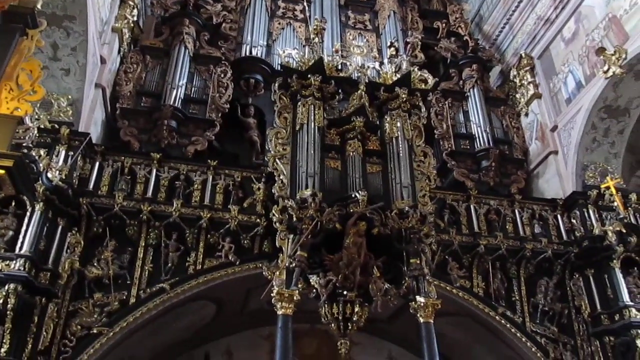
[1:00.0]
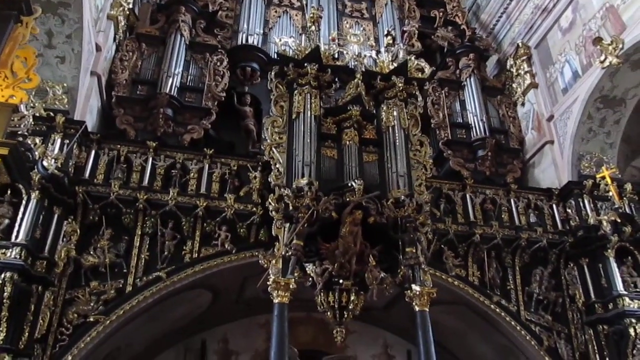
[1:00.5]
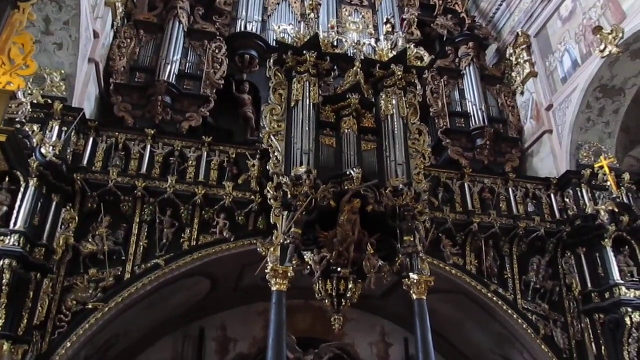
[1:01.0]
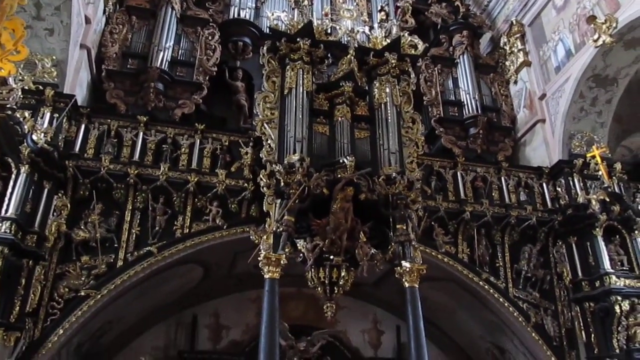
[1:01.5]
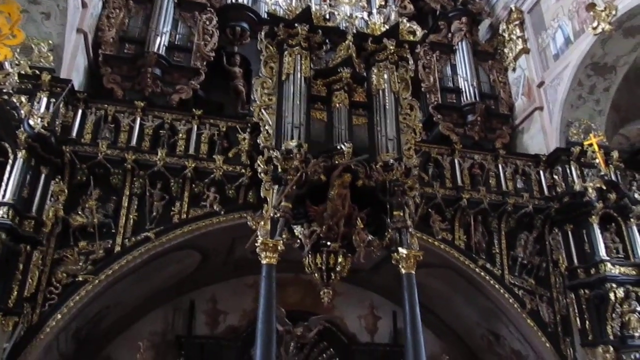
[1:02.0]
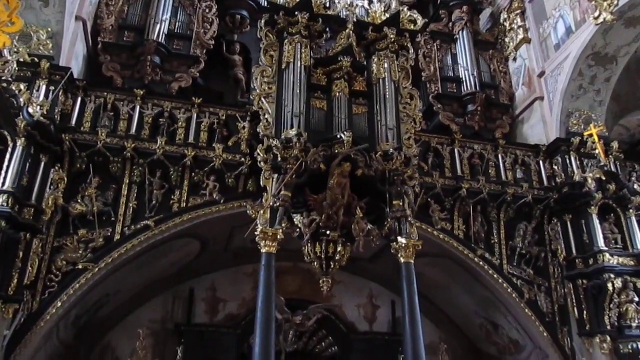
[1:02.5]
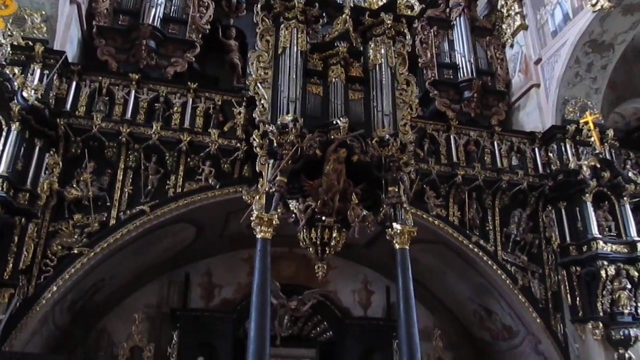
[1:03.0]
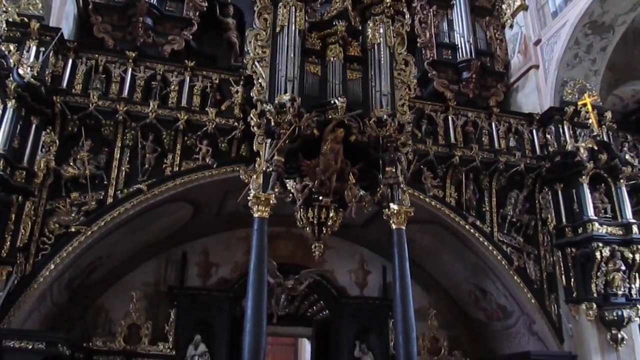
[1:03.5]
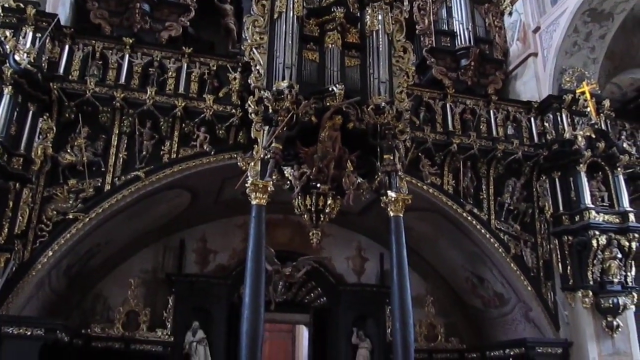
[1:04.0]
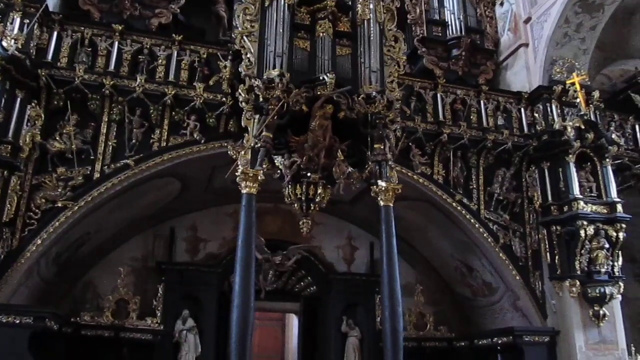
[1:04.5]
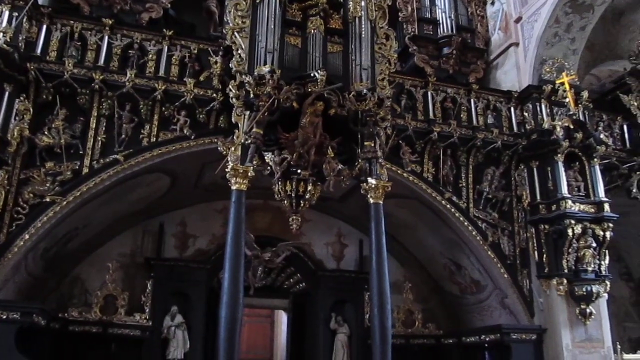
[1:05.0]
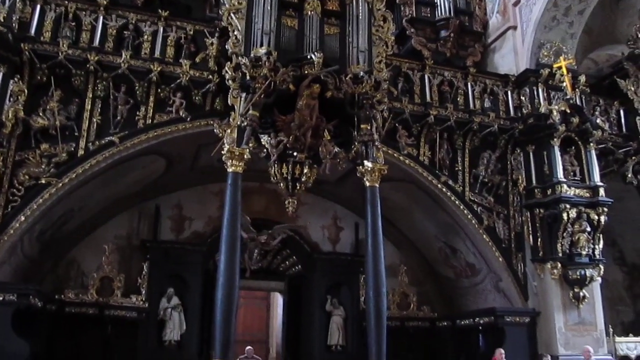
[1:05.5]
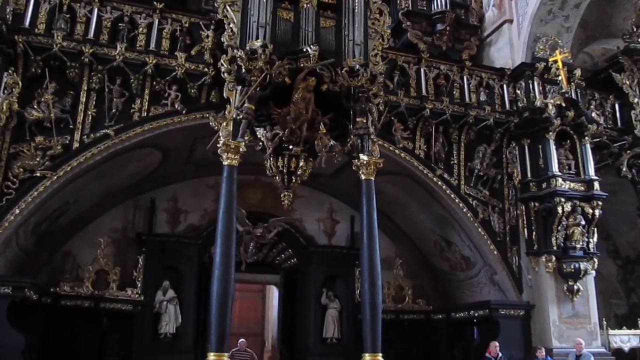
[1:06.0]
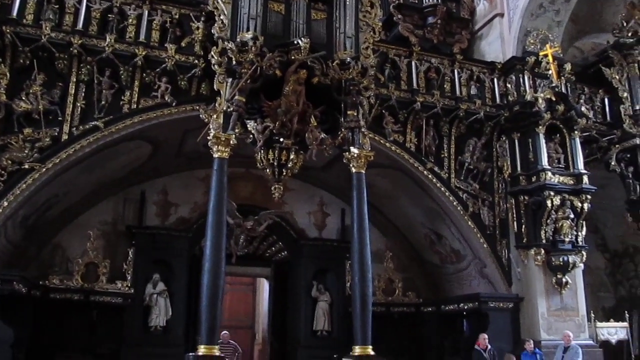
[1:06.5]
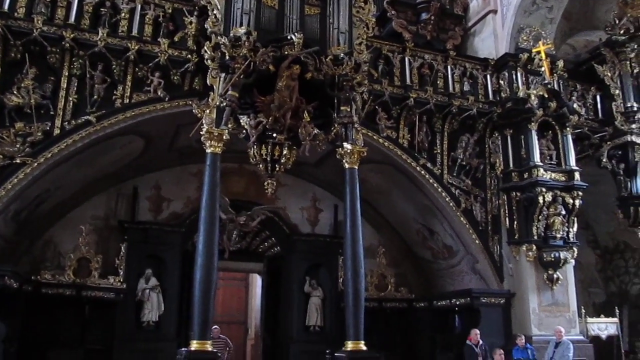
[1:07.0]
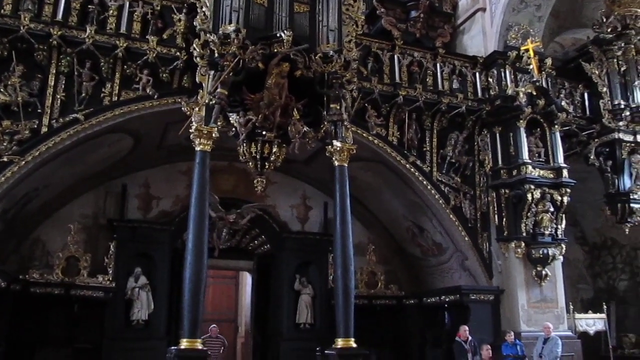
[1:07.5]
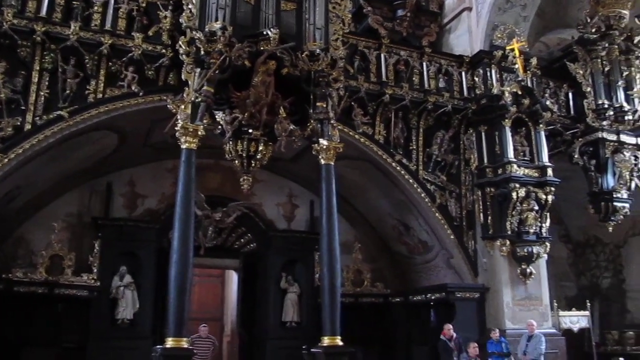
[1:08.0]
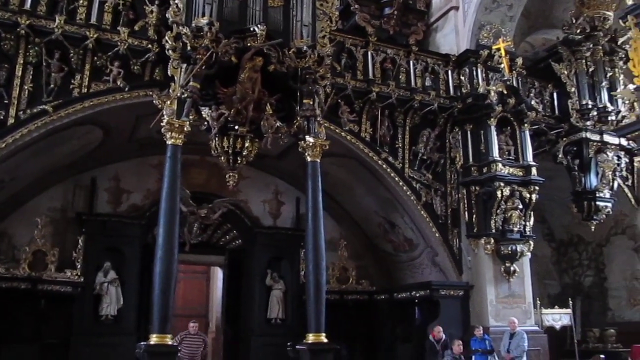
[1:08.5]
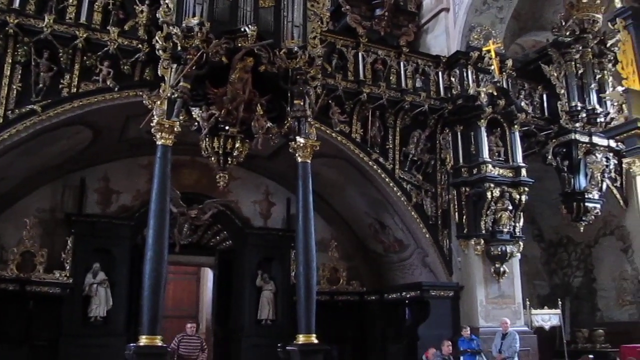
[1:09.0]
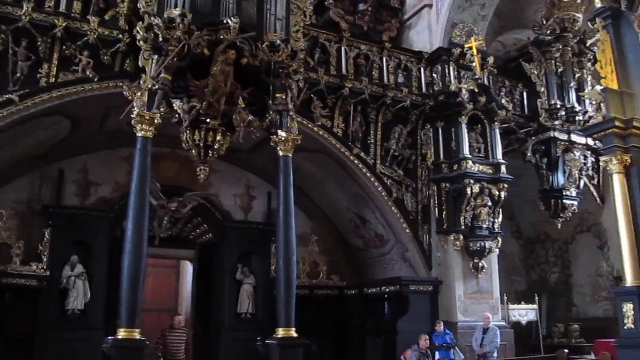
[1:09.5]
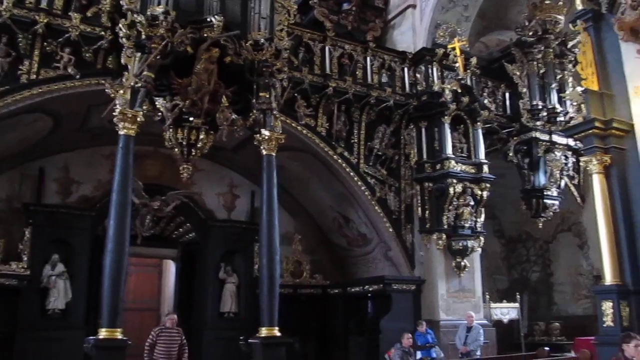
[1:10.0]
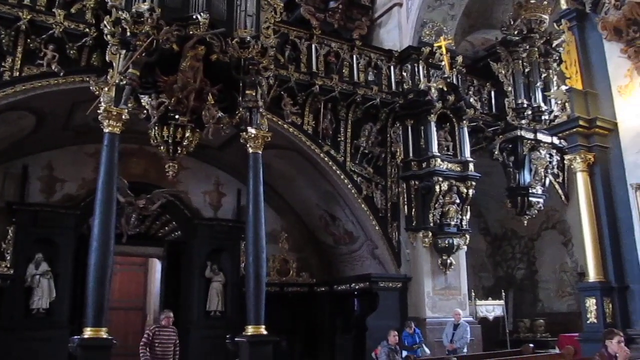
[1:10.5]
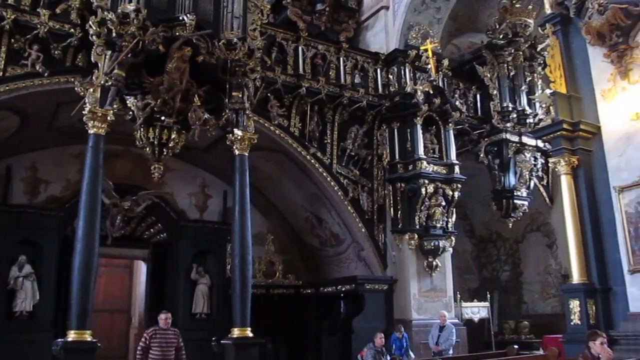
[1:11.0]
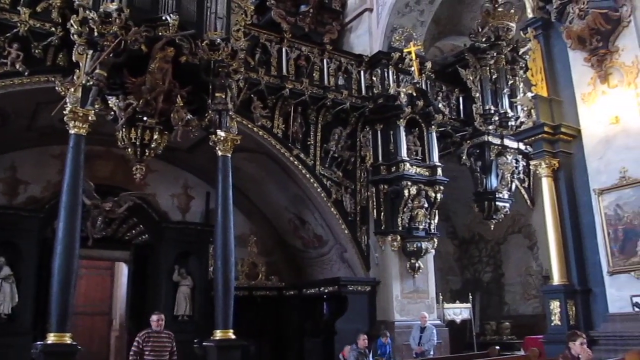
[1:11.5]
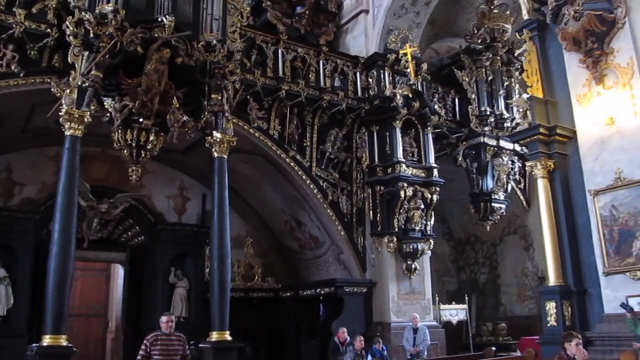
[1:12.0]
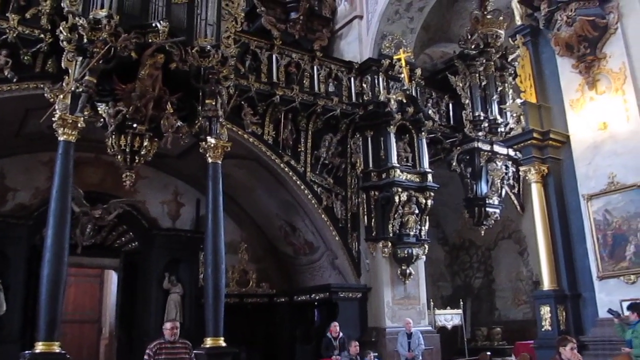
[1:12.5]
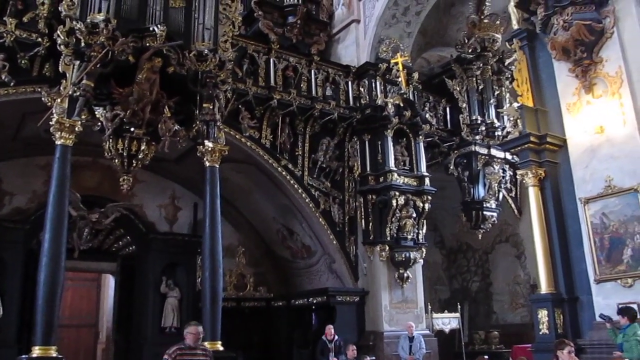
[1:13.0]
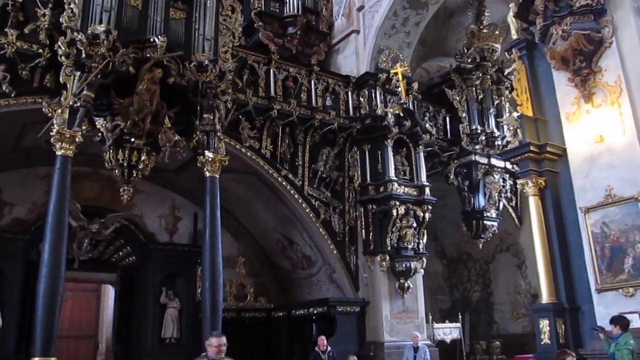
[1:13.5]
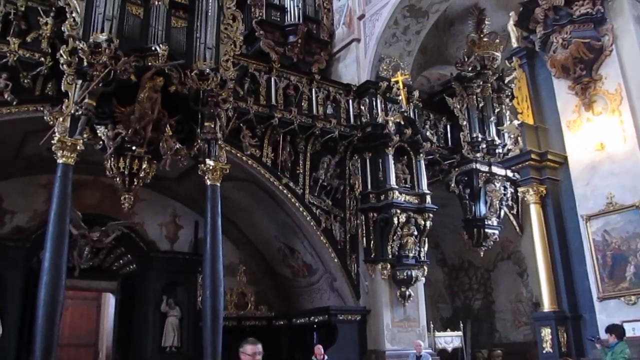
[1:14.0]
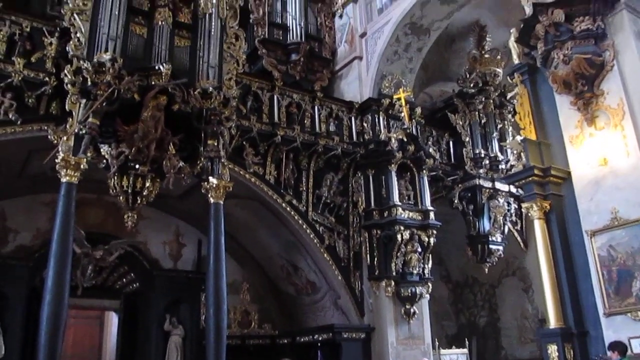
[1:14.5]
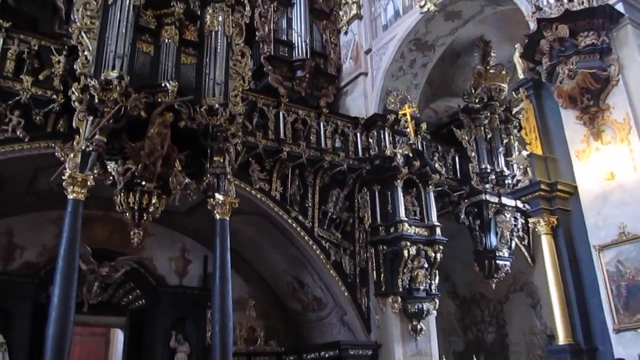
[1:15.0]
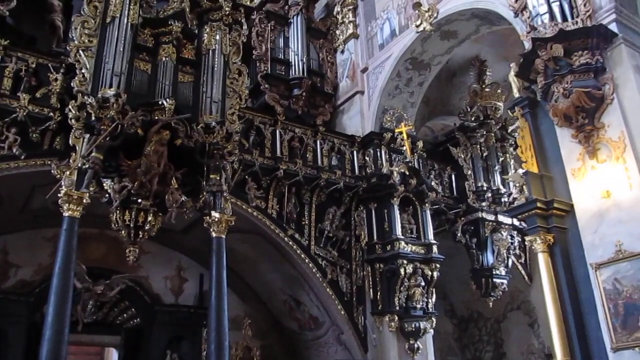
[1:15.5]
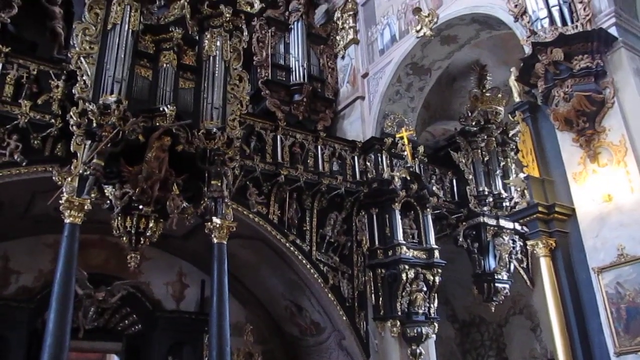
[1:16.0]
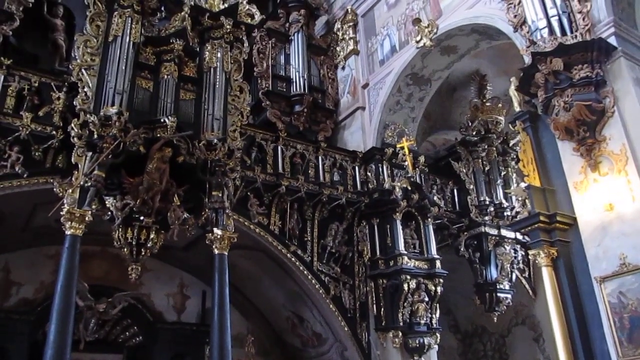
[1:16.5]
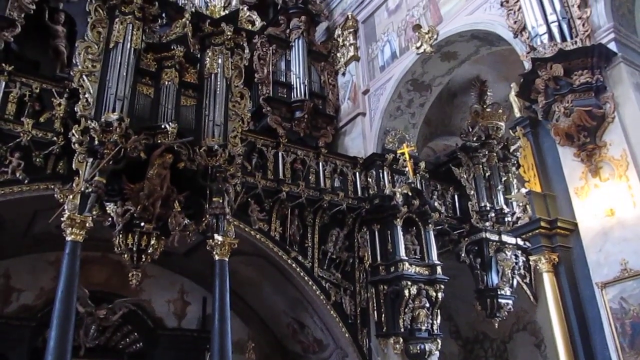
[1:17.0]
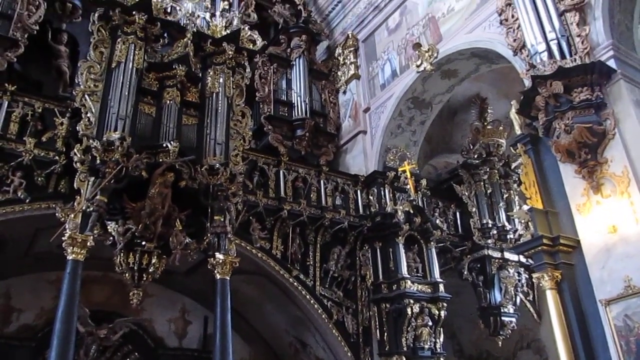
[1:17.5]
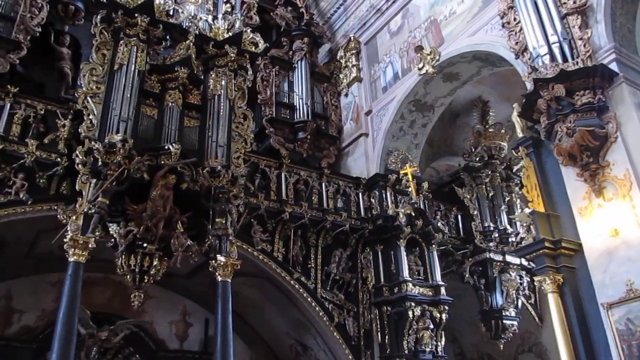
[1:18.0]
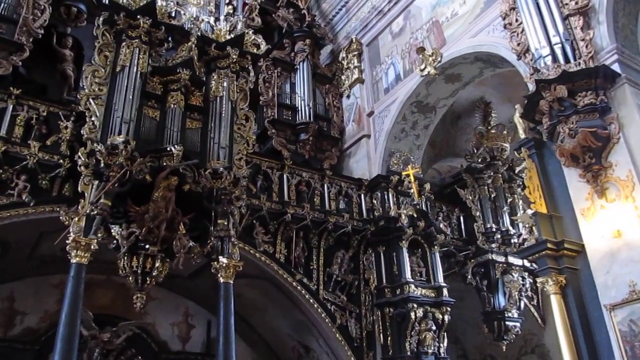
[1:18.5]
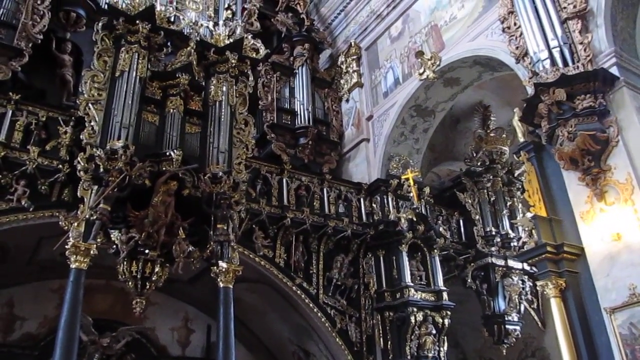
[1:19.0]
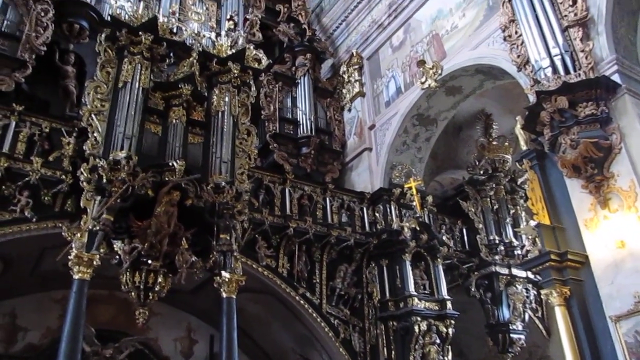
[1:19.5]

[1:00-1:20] The view shifts downward to the lower part of the altar. In the center there is what looks like a door, an opening that someone walks through. On the left and right sides of this opening there appear to be two statues, one on each side, and there looks like another statue on top of the opening, though it is hard to see. People are visible at the bottom: a man walking on the left side at the bottom and a group of people at the bottom right. A person holding a camera is in the bottom right corner. The scene then shifts upward to show the very large altar structure and the upper area of the church.